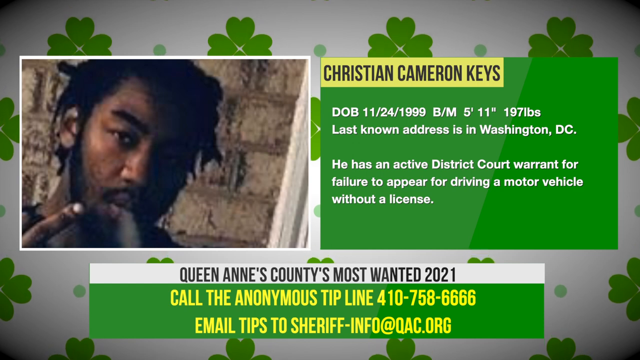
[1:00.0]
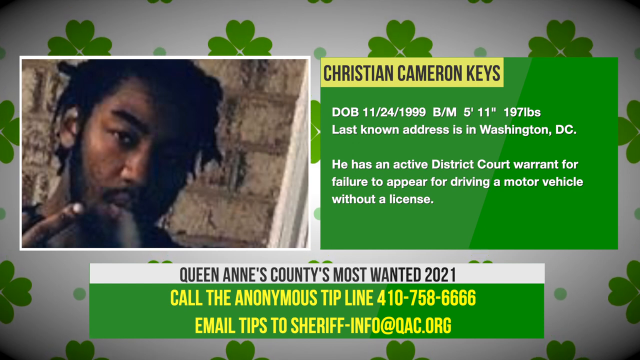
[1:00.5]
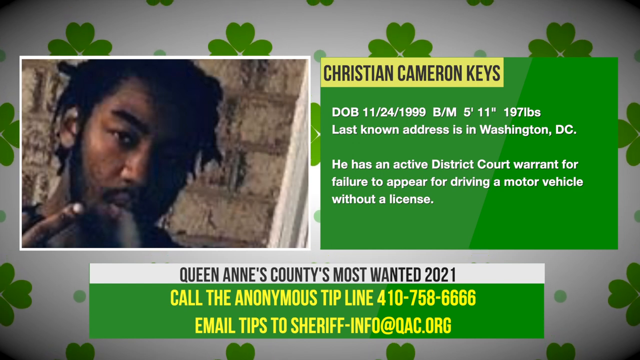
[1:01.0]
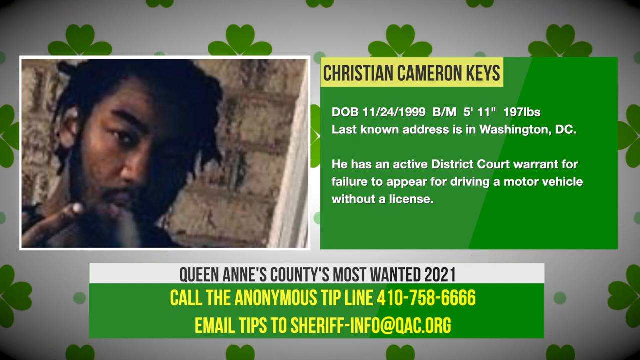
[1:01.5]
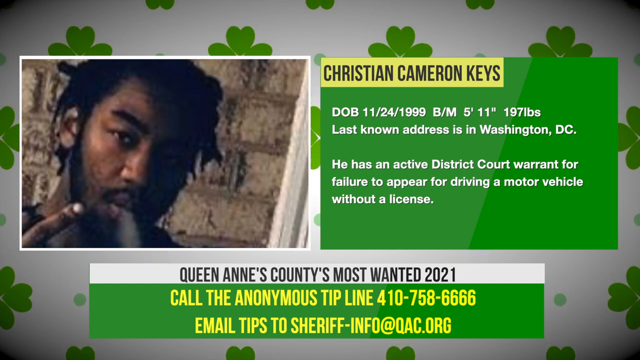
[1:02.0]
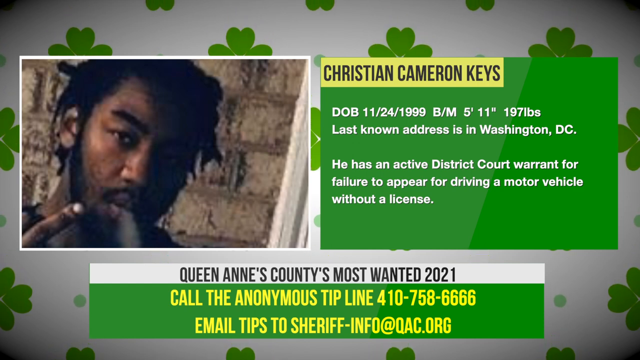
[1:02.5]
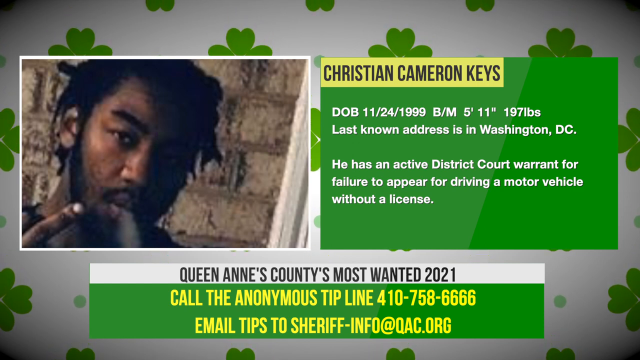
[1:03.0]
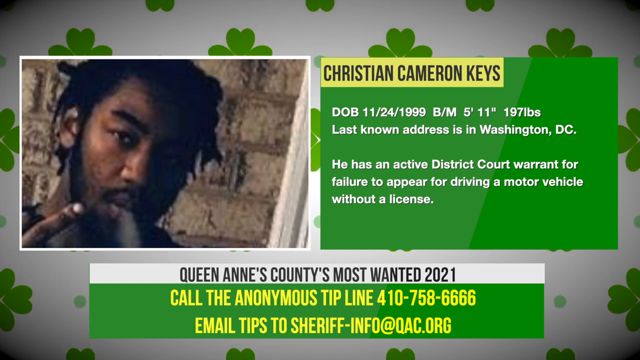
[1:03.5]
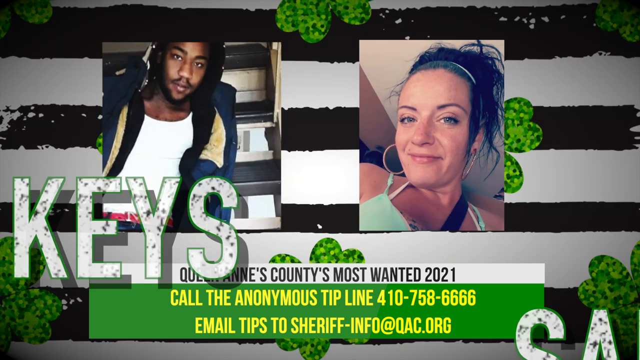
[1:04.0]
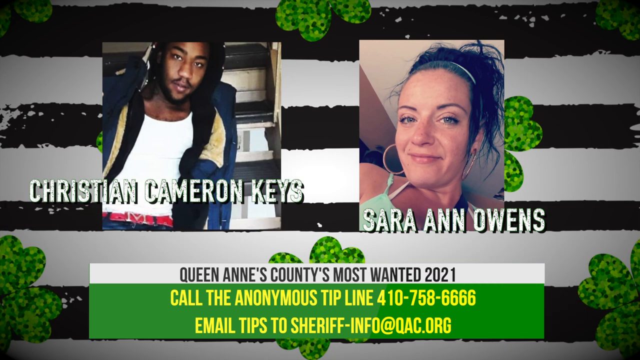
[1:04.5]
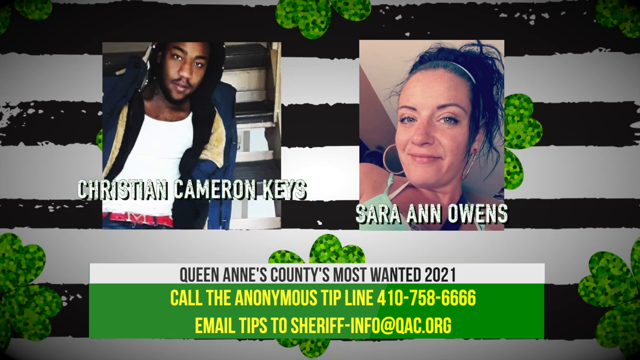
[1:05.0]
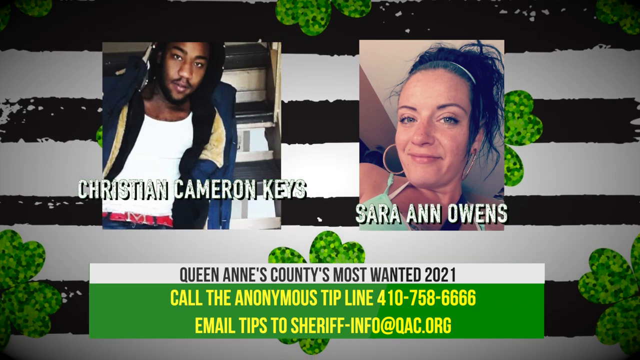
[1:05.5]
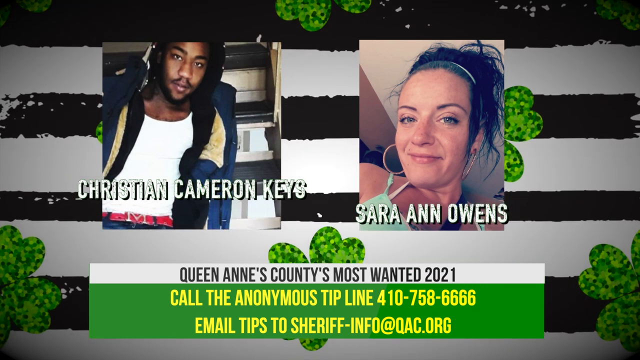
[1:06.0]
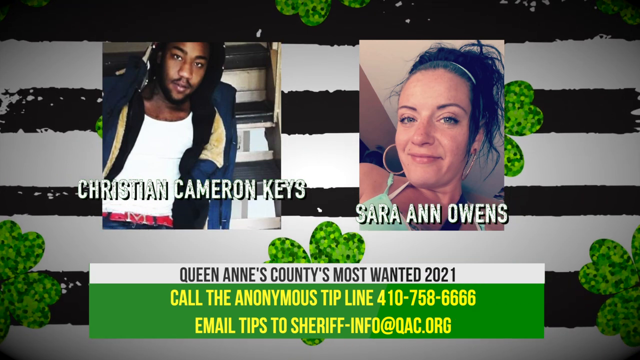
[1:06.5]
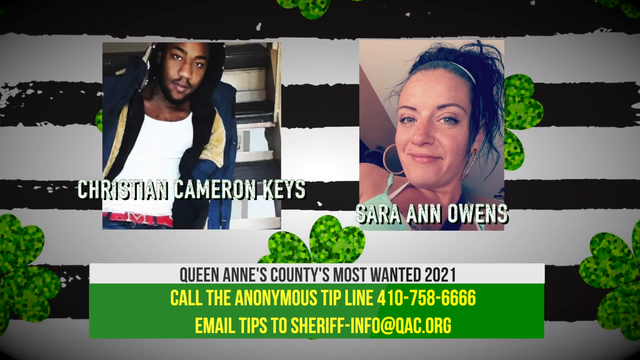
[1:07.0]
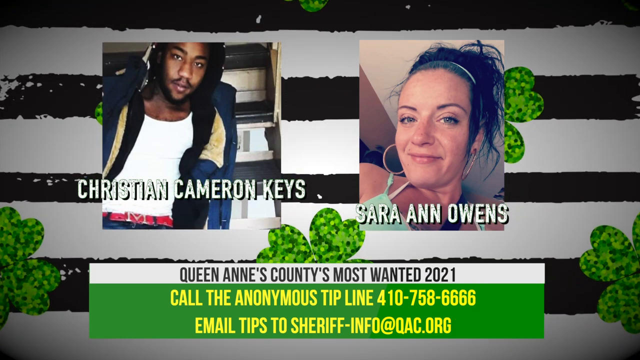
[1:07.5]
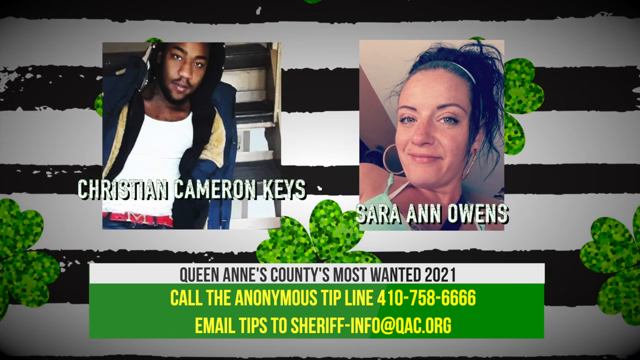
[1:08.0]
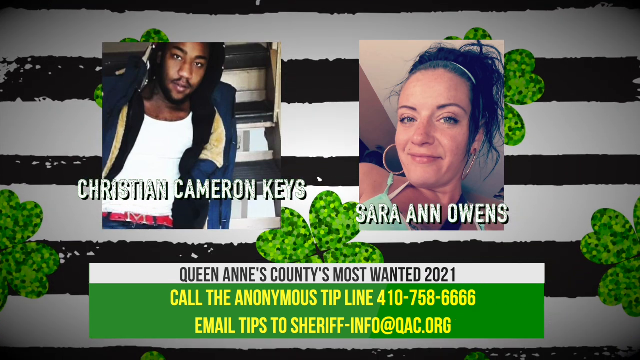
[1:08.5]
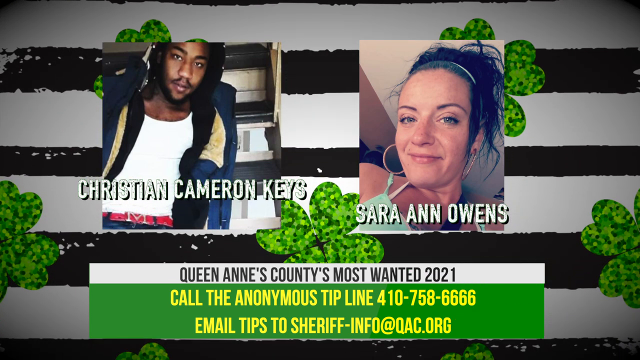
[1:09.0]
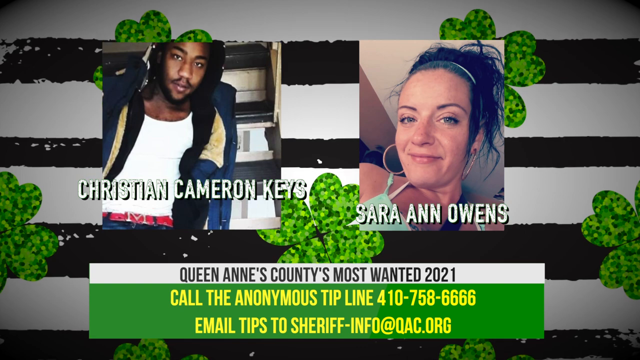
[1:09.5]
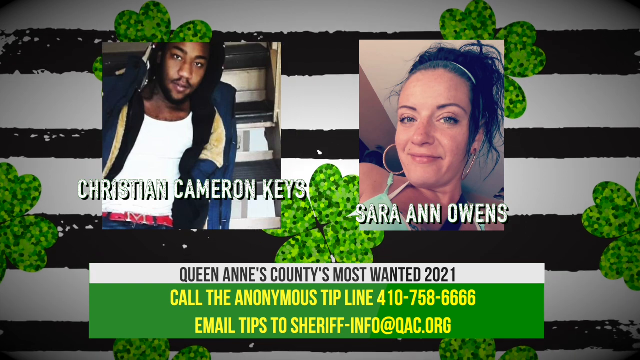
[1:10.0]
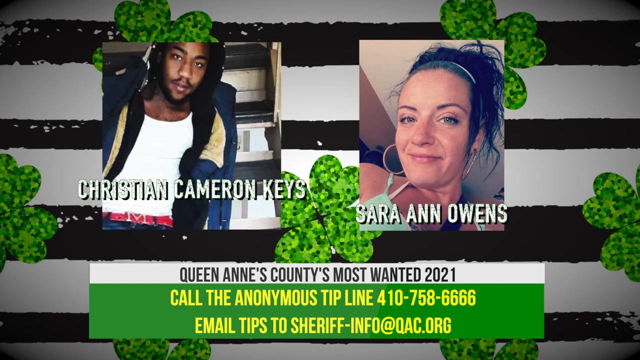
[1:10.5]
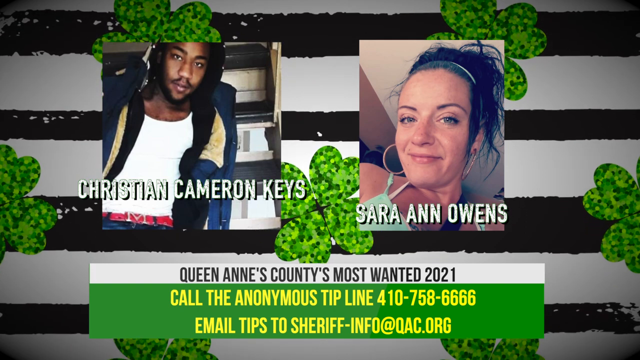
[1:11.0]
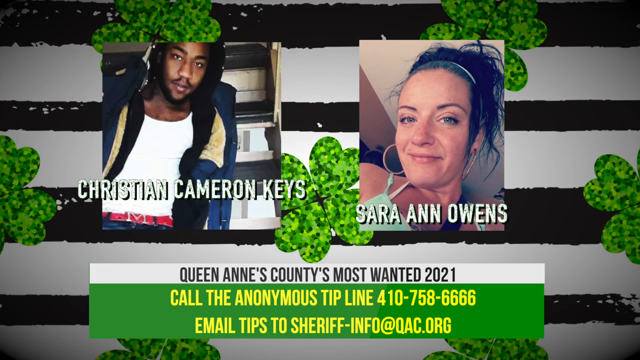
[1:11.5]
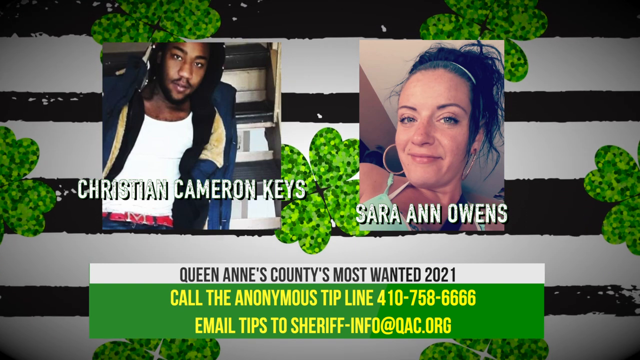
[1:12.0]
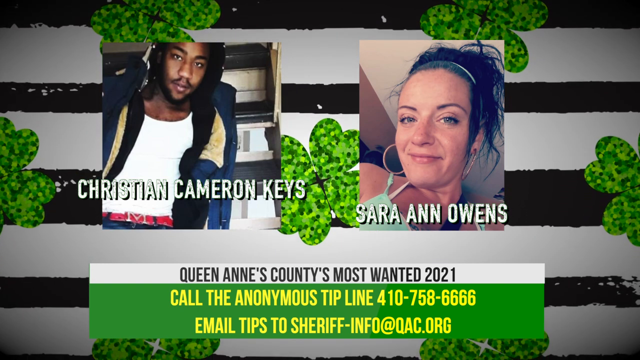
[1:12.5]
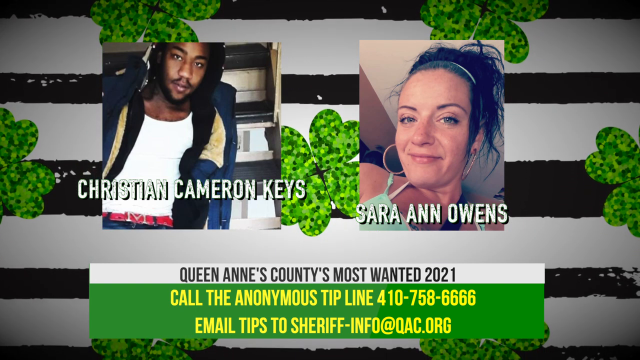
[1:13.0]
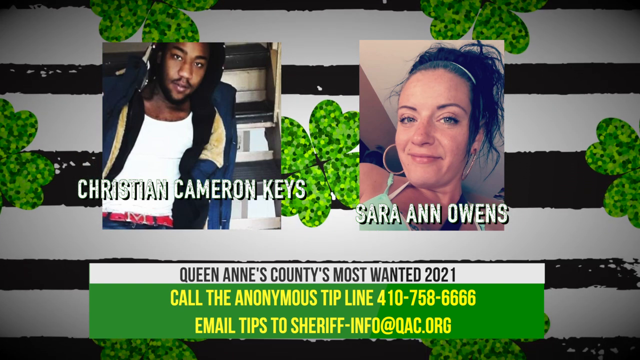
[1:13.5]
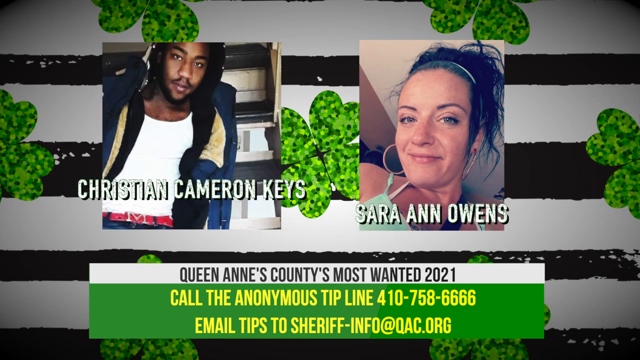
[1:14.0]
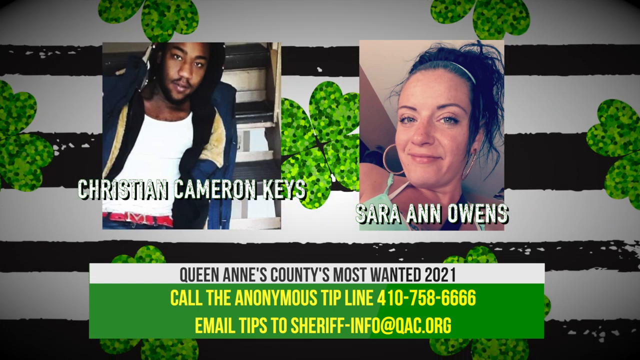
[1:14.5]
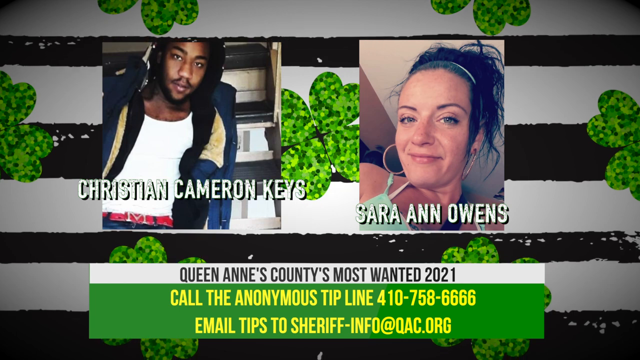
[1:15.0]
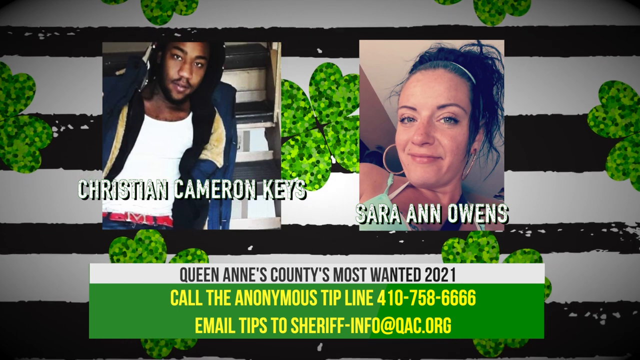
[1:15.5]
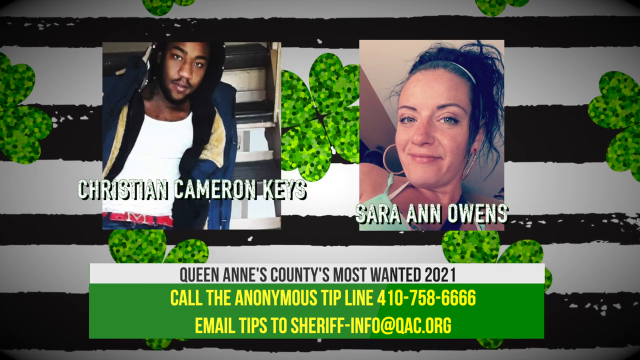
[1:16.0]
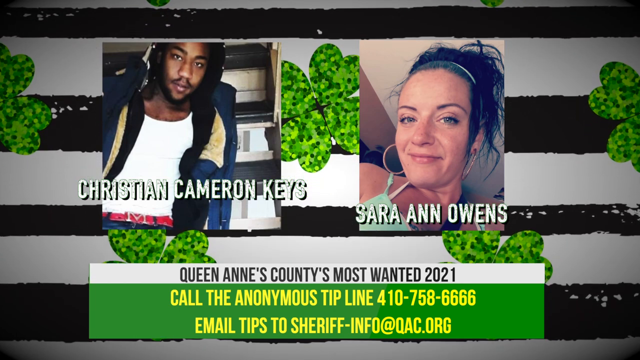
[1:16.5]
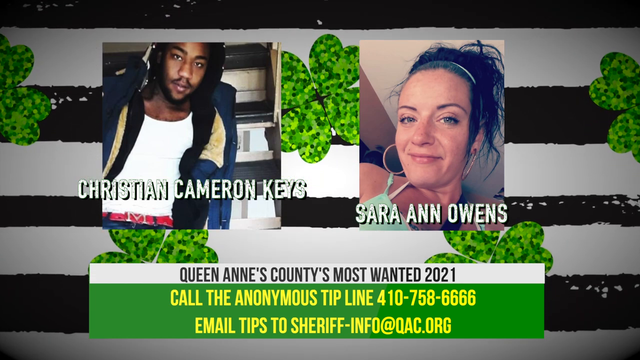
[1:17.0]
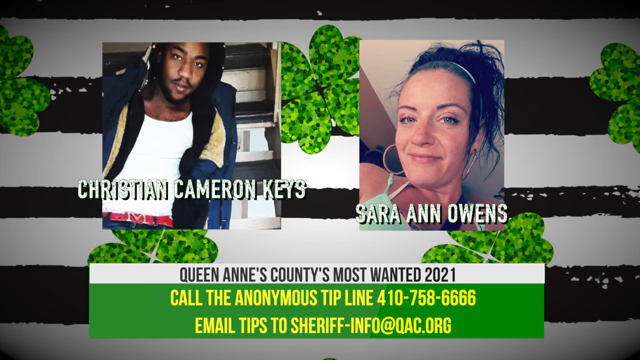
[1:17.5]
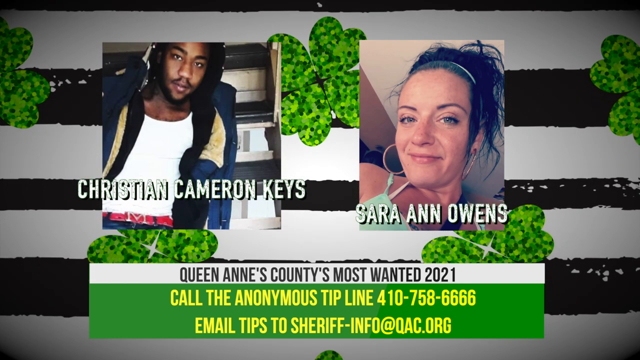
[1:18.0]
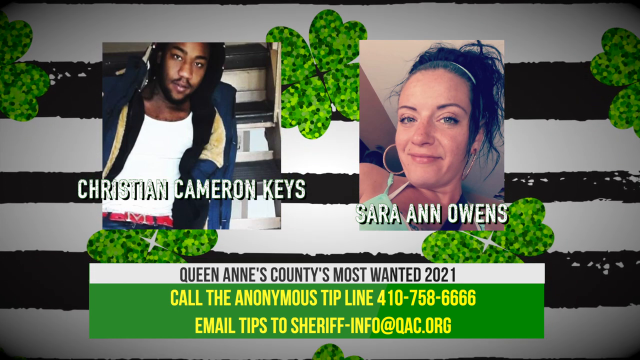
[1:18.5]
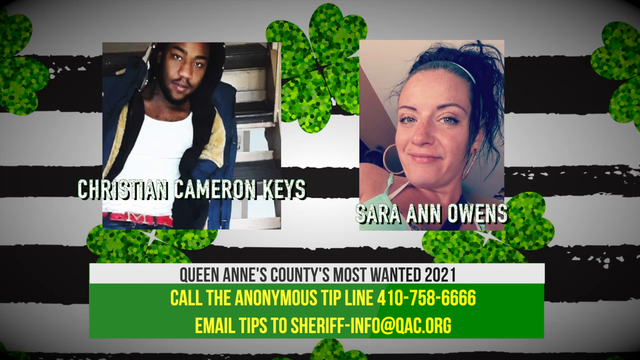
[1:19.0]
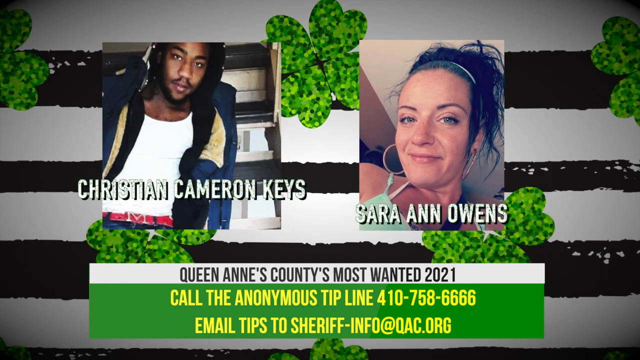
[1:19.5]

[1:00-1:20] Two rectangular windows occupy the central part of the frame. The window at the left end of the screen contains a photograph of a boy, while the rectangle on the right side contains some white text on a green background. At the bottom of the screen, another rectangular banner contains yellow text on a green background and black text on a white background. Next, photographs of two people, a man and a woman, appear at the center of the screen, overlapped by white text lines with very thin black edges. Behind these photographs are graphics in green, black and white, including green squares and horizontal lines that alternate black and white.